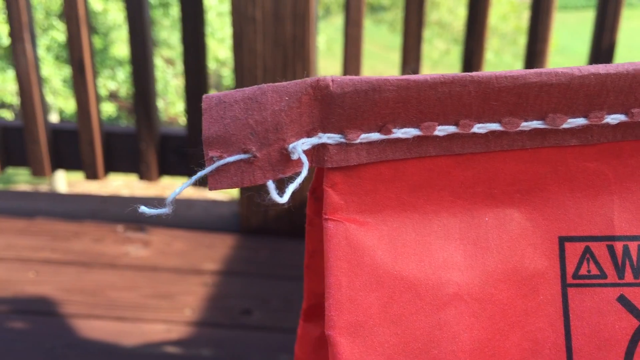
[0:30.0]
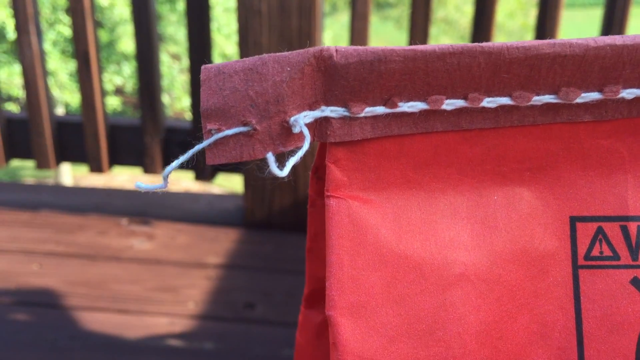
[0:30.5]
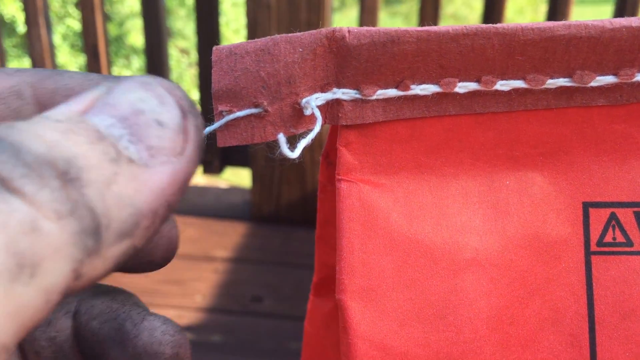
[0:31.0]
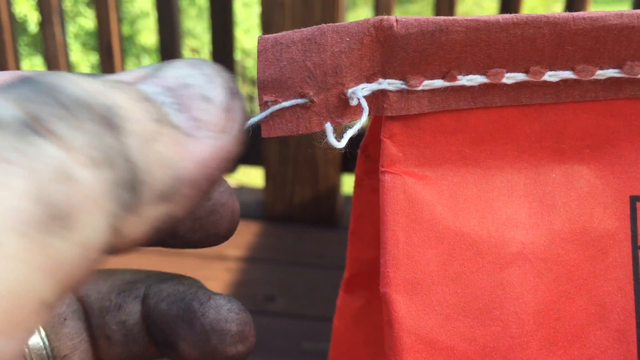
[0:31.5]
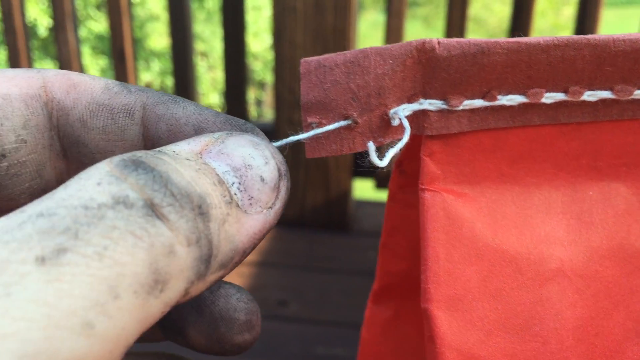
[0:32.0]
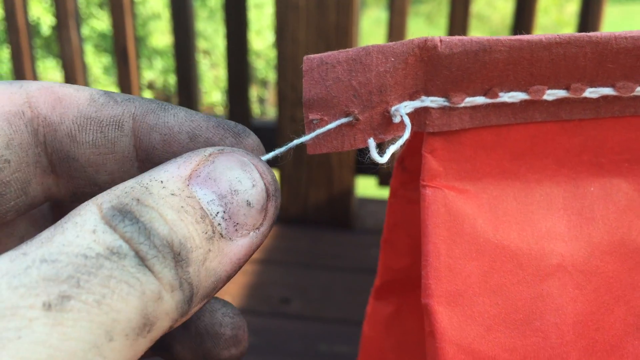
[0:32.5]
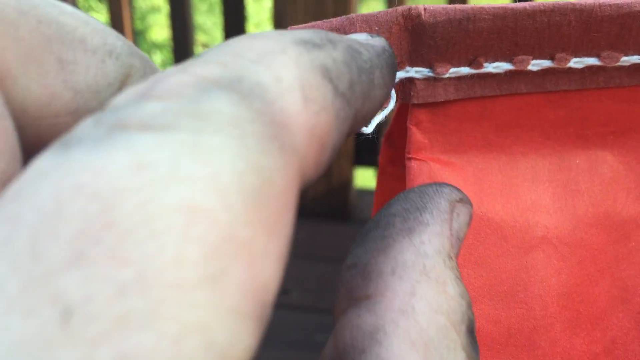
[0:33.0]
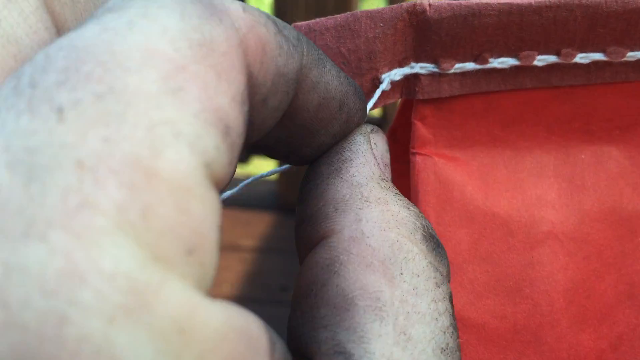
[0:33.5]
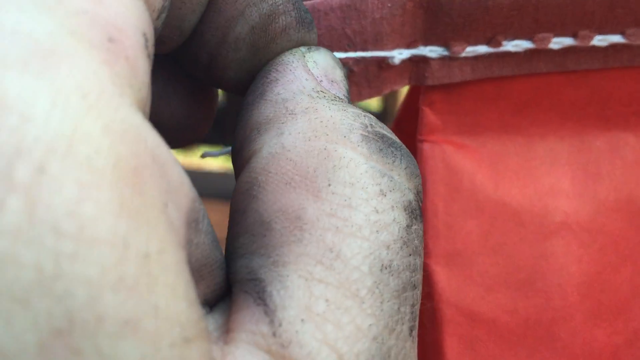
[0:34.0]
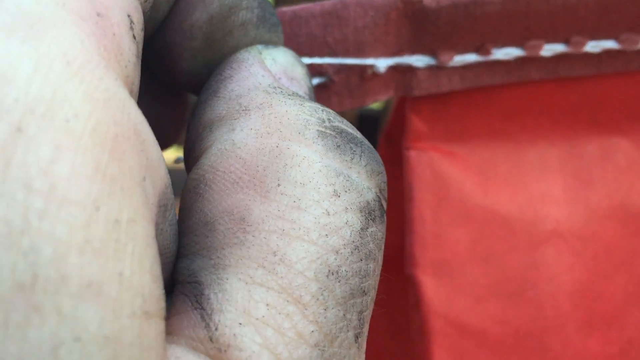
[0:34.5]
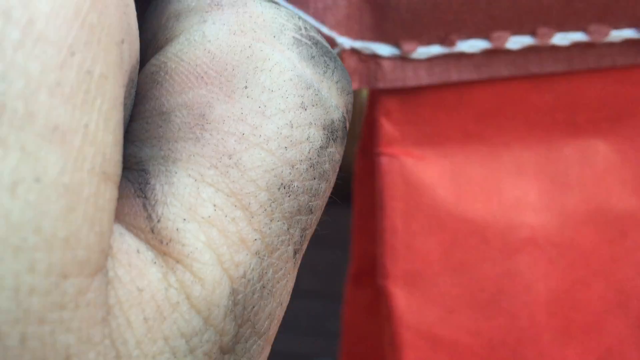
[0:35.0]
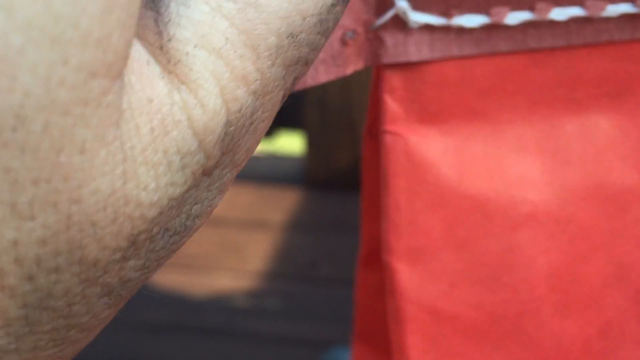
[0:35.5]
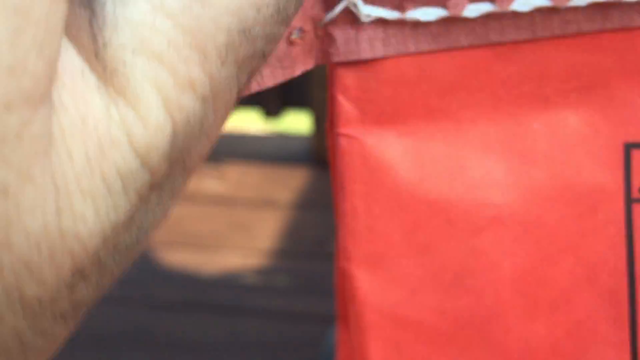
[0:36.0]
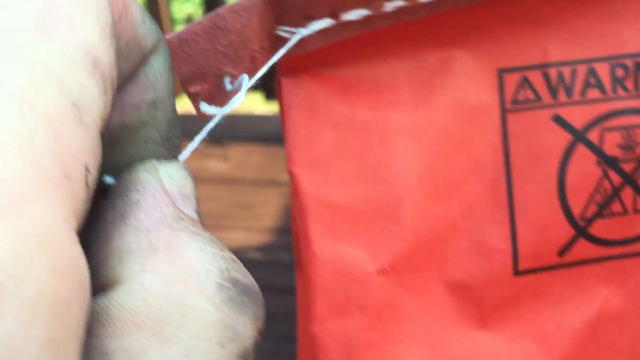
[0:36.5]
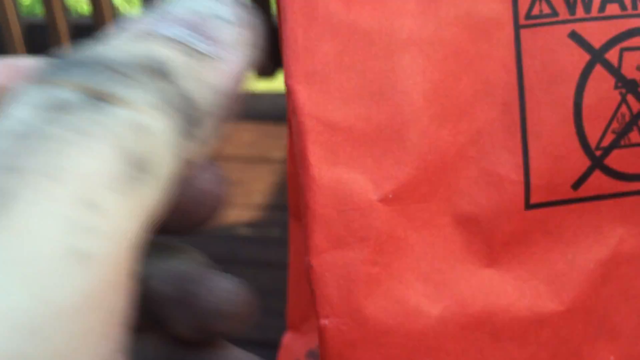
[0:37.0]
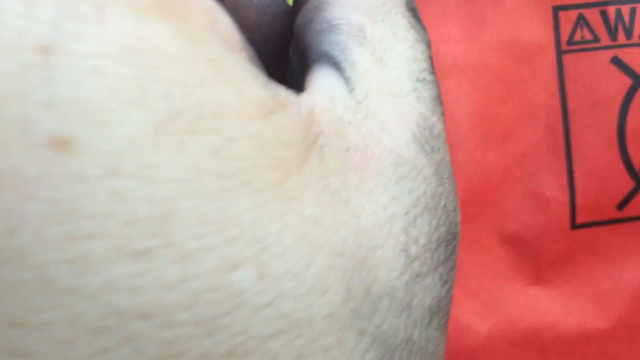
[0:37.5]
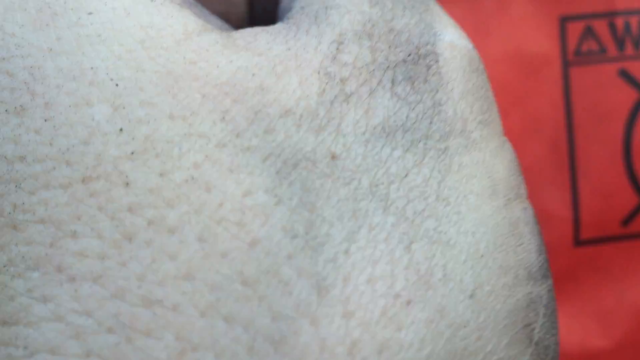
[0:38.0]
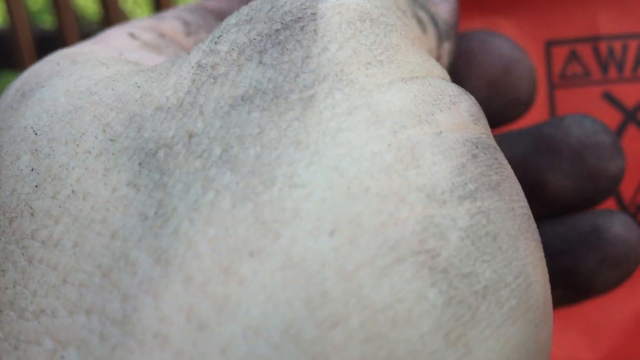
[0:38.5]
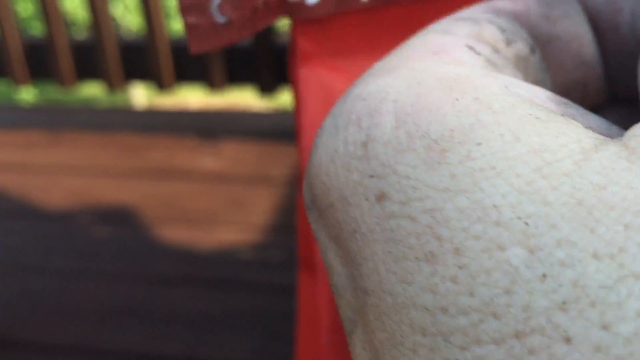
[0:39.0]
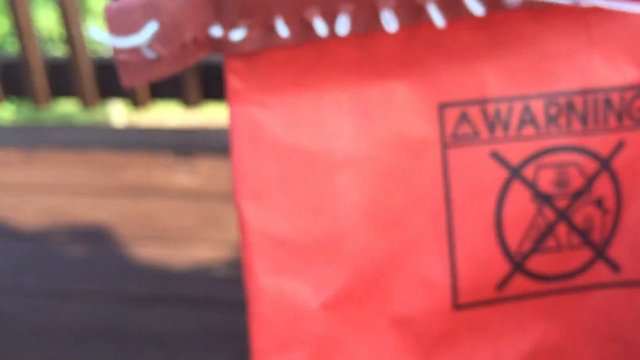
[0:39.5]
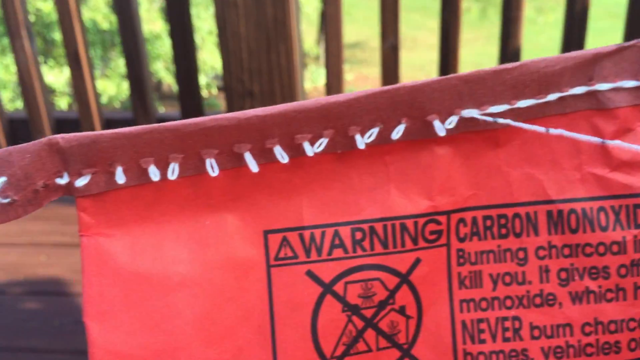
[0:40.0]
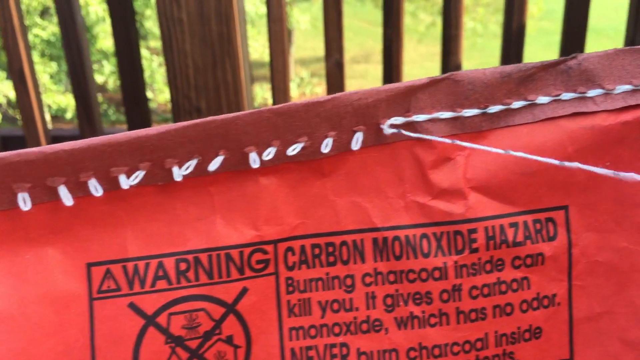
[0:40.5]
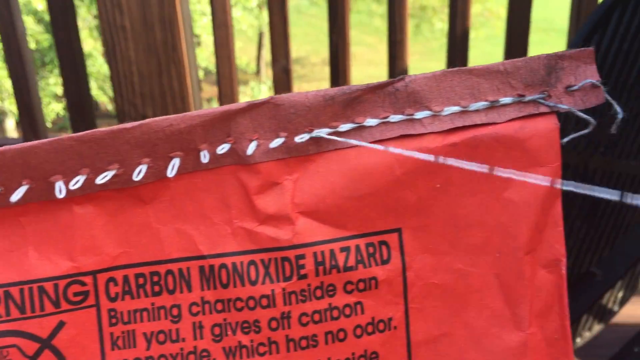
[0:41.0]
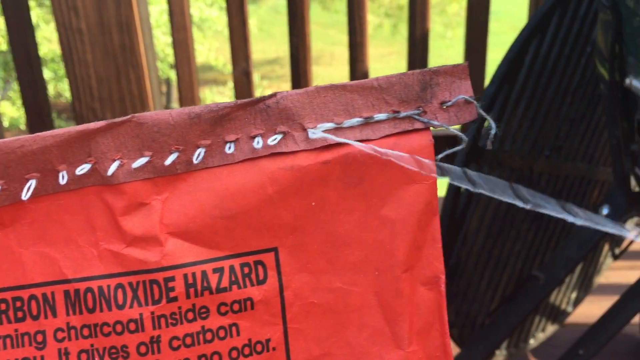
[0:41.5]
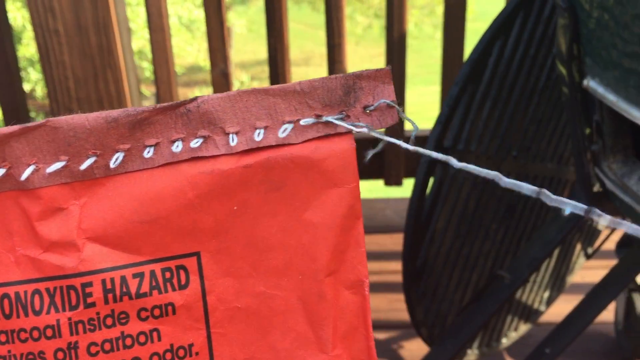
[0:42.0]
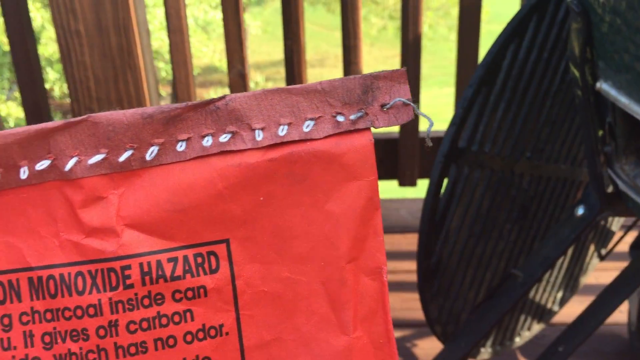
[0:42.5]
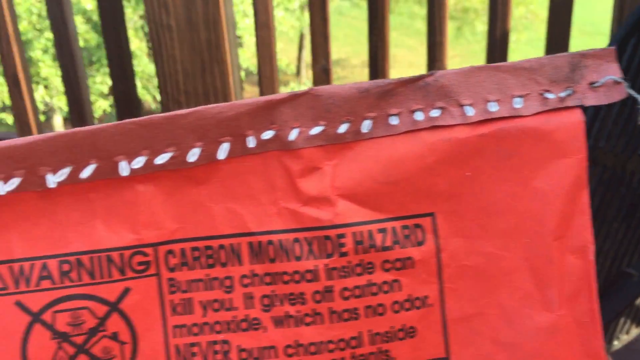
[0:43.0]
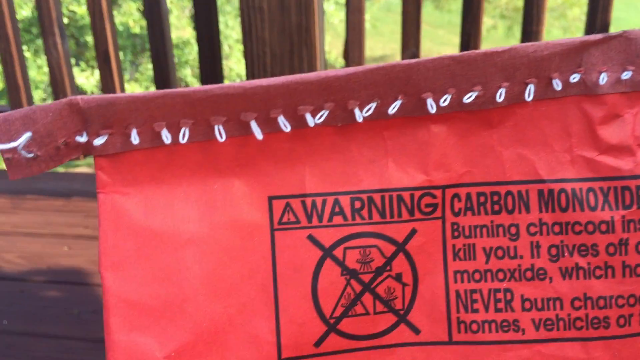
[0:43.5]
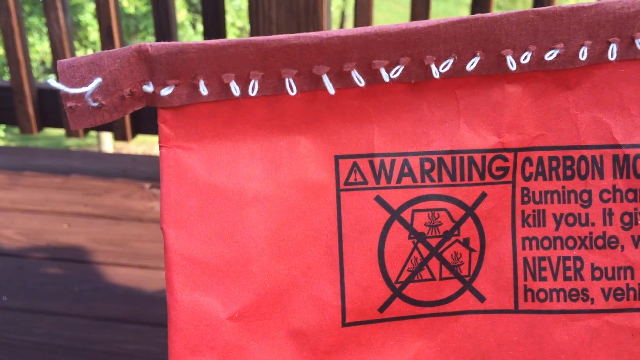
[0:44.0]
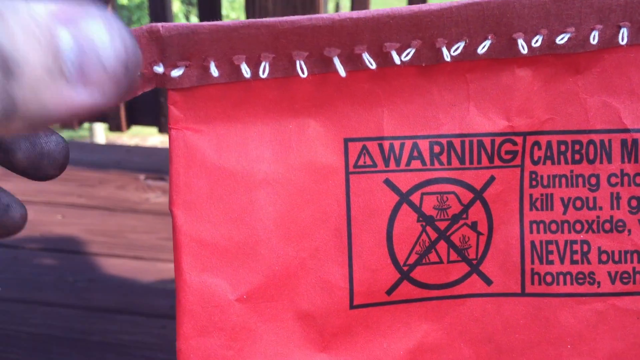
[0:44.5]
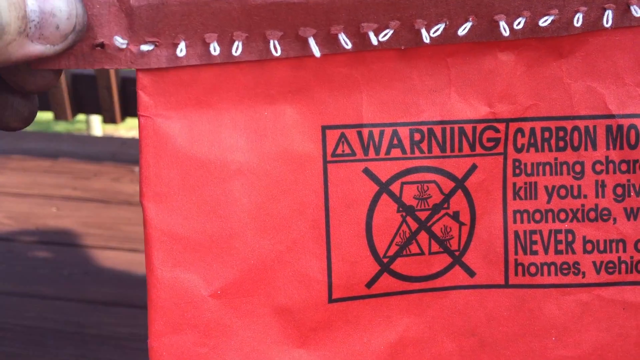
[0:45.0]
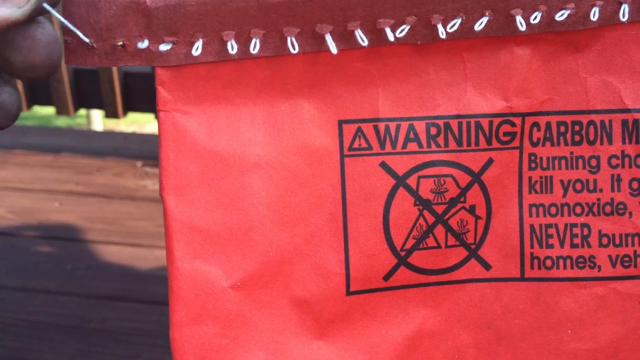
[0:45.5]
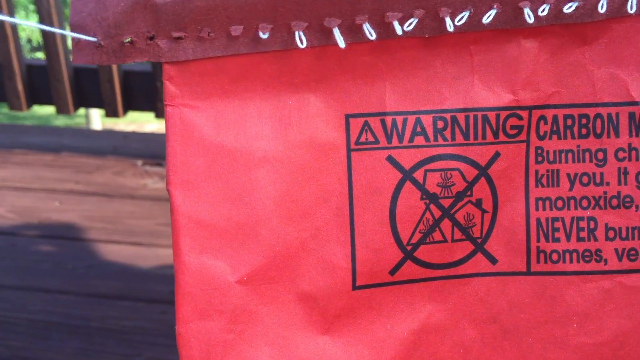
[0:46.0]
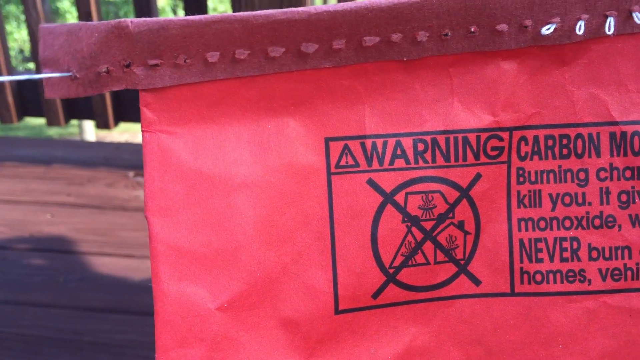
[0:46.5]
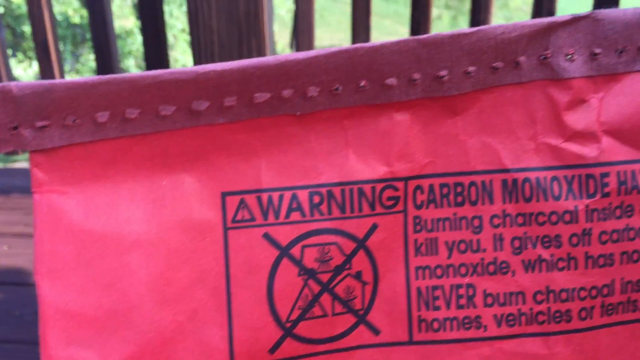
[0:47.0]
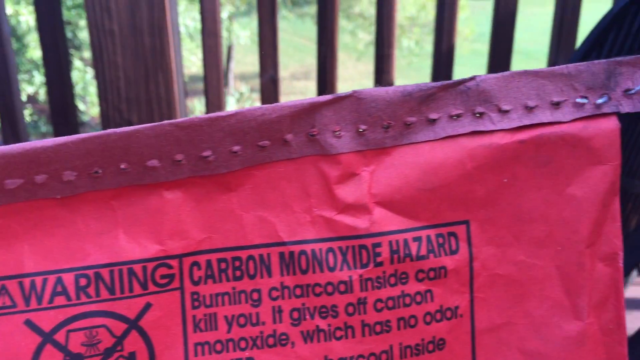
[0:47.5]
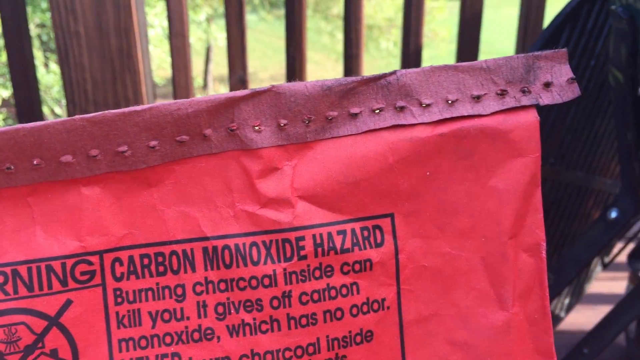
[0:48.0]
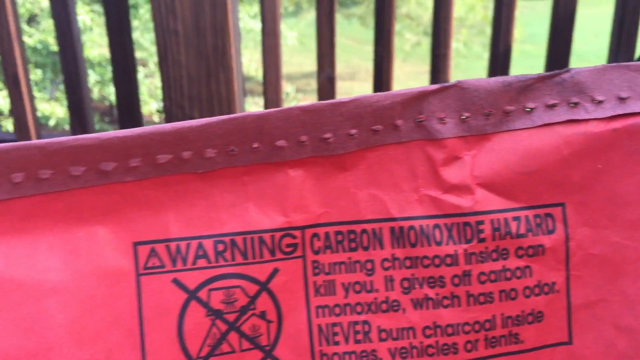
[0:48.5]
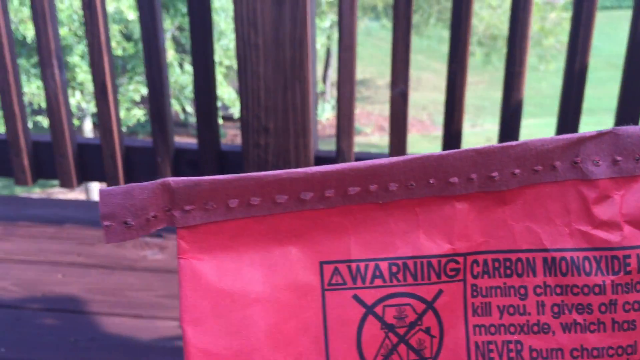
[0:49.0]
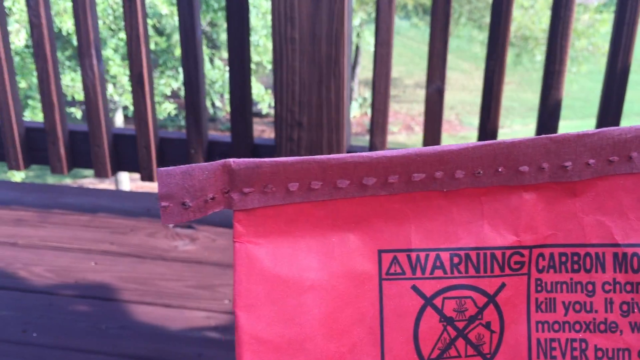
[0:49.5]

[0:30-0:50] The person tries to untie the bag. The hands look black, apparently from charcoal, and from the colours of the bag the contents seem to be charcoal, though this is not certain. The shadows suggest it is past noon. There are green plants behind what seems to be someone's porch.